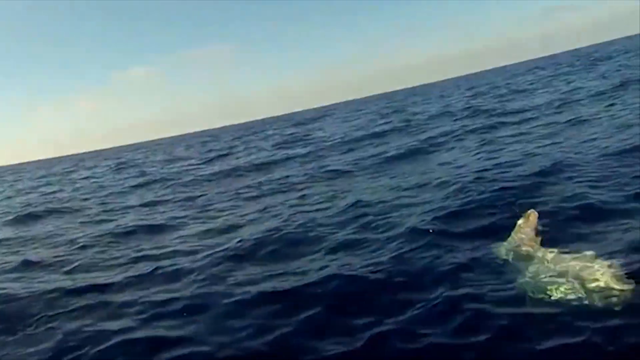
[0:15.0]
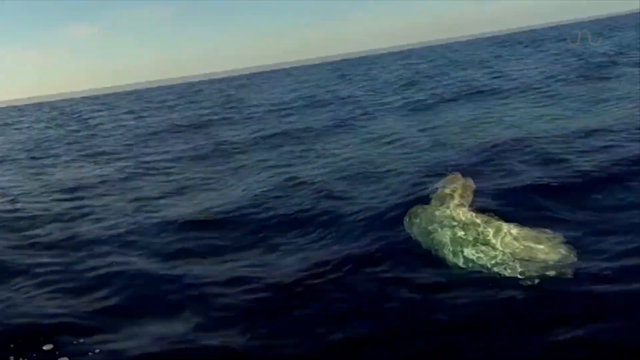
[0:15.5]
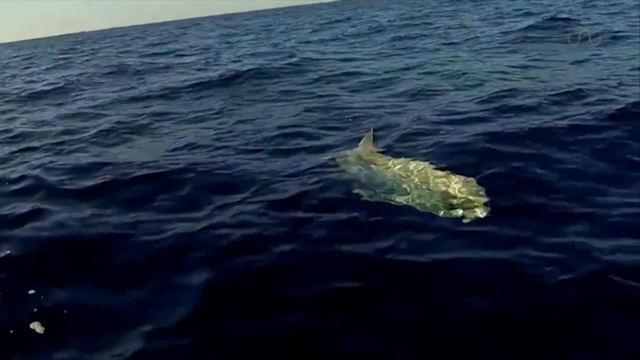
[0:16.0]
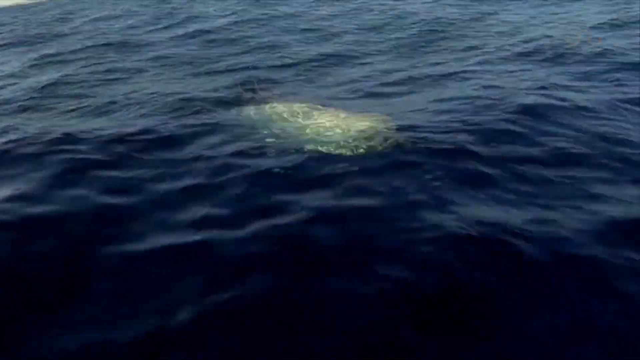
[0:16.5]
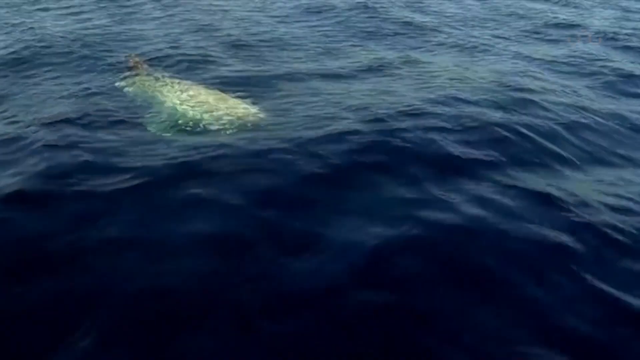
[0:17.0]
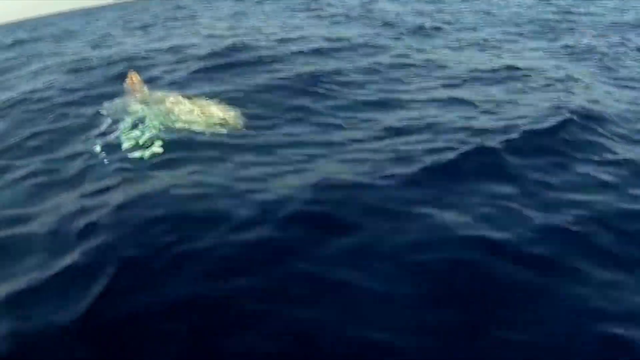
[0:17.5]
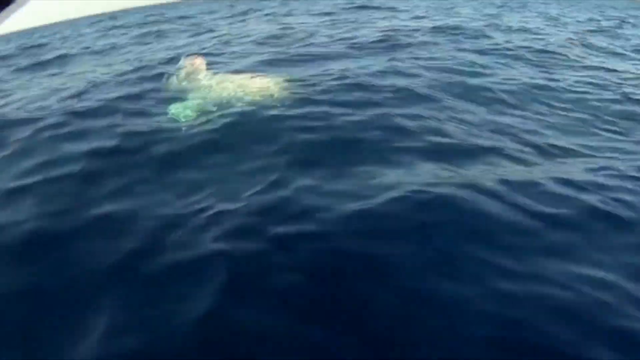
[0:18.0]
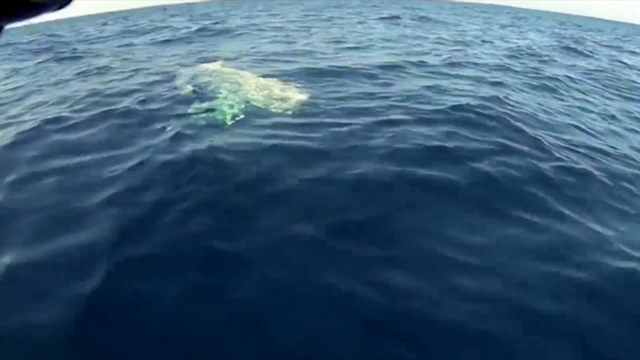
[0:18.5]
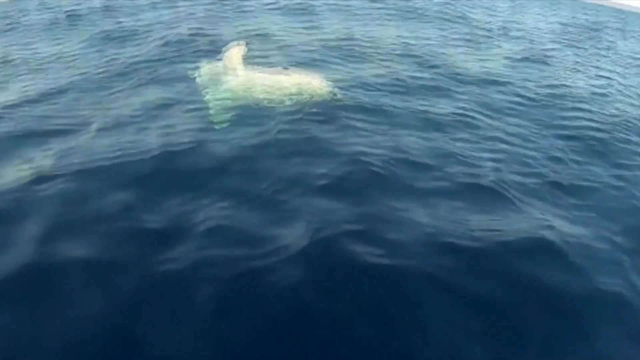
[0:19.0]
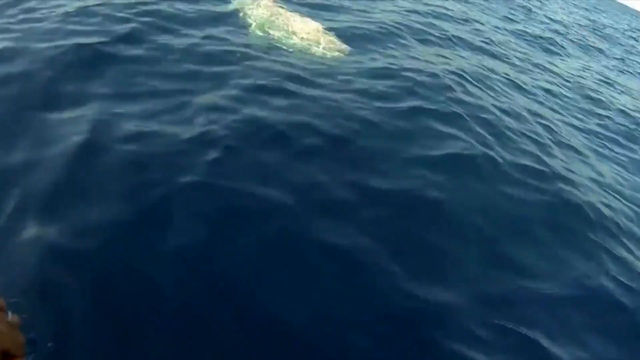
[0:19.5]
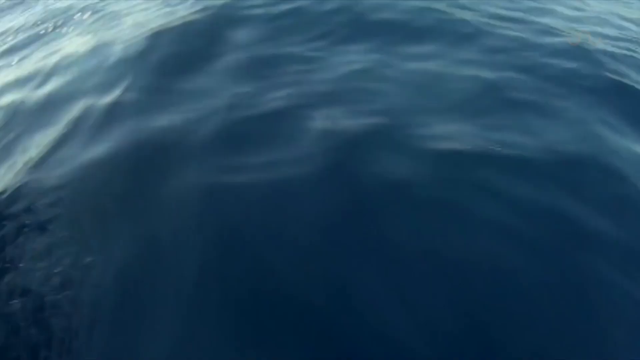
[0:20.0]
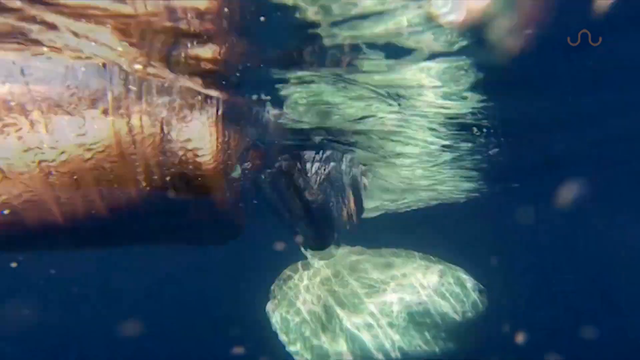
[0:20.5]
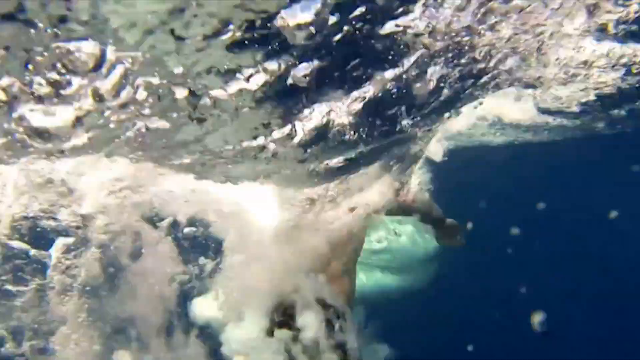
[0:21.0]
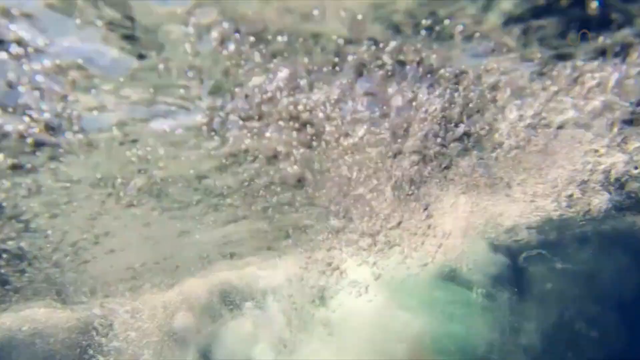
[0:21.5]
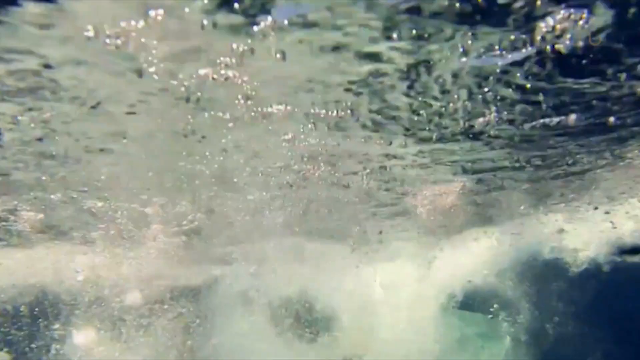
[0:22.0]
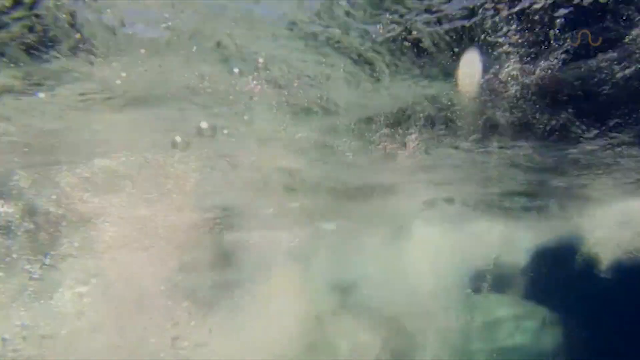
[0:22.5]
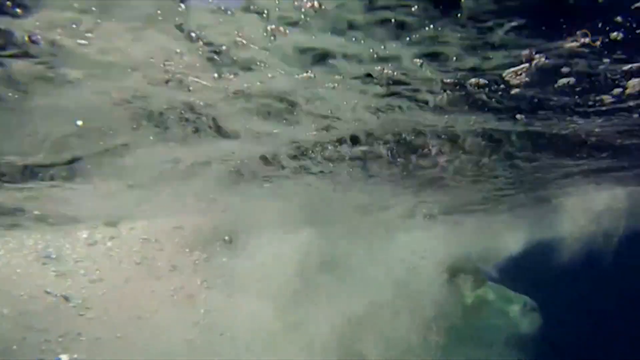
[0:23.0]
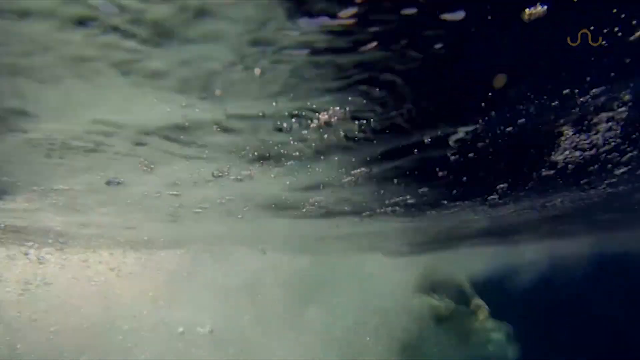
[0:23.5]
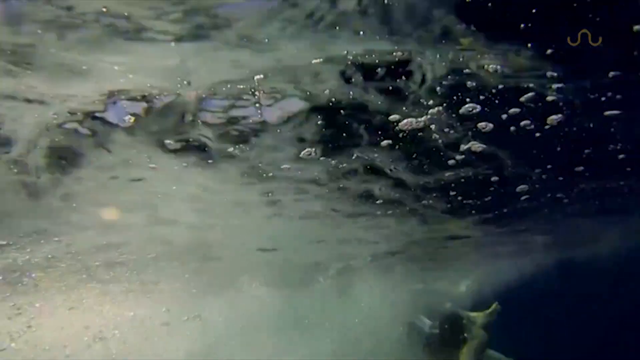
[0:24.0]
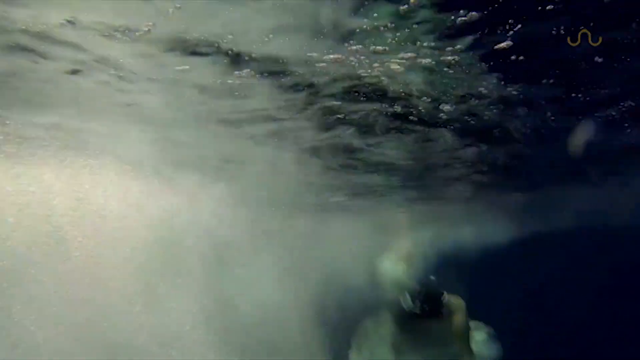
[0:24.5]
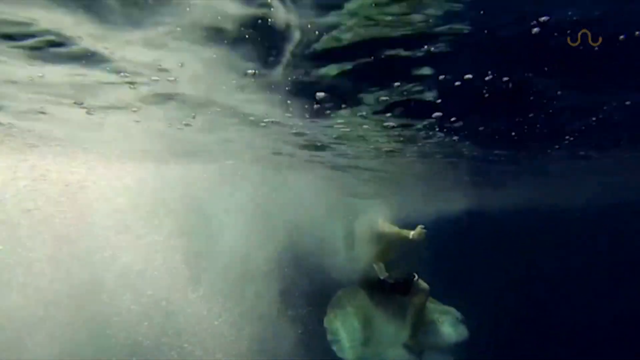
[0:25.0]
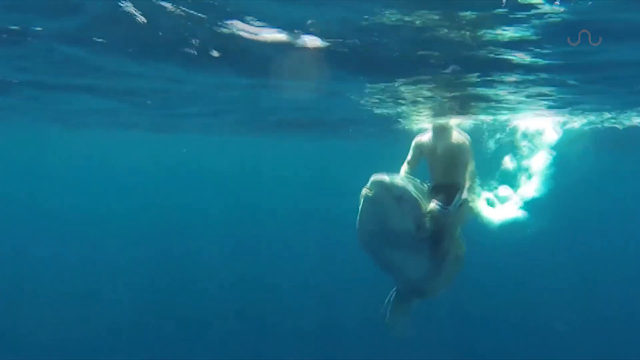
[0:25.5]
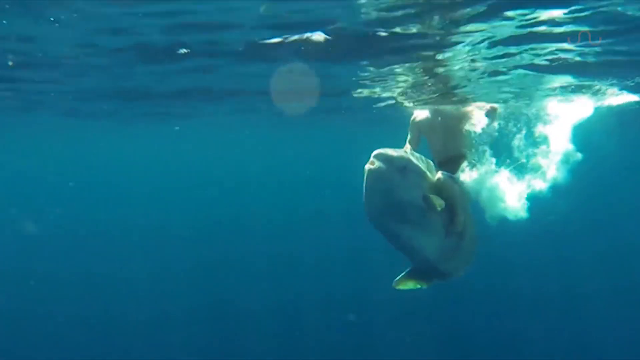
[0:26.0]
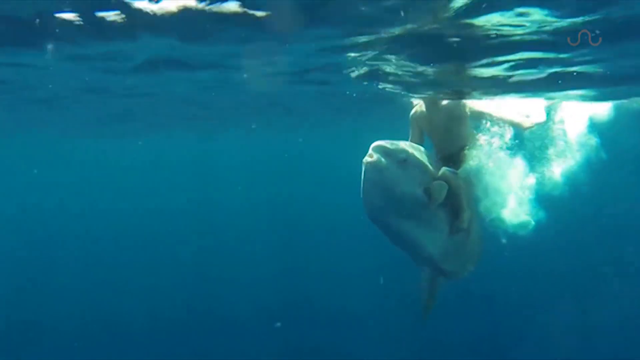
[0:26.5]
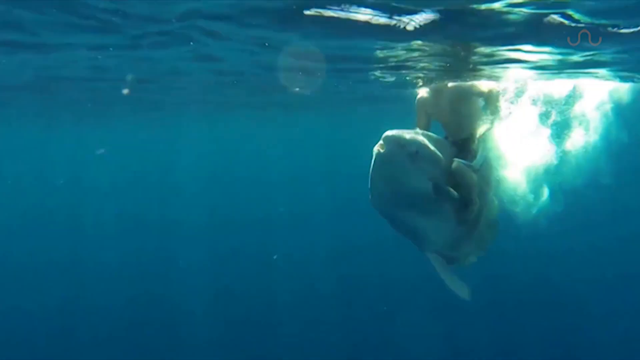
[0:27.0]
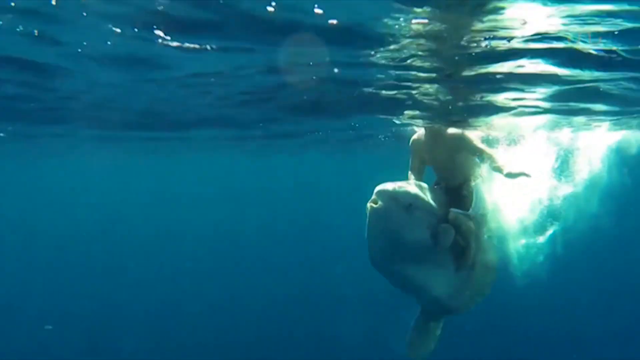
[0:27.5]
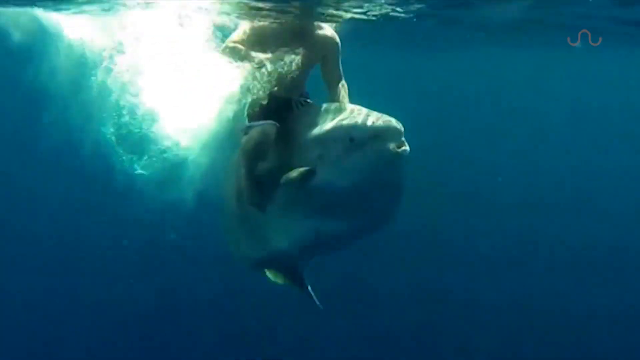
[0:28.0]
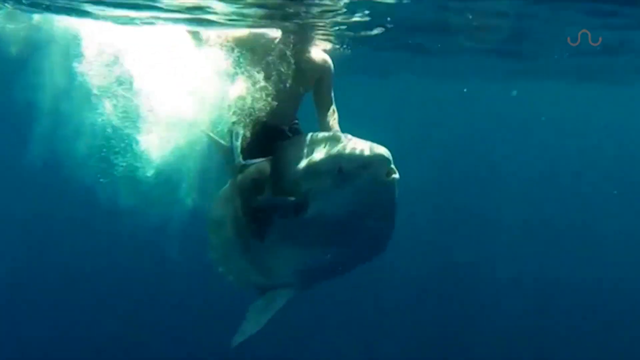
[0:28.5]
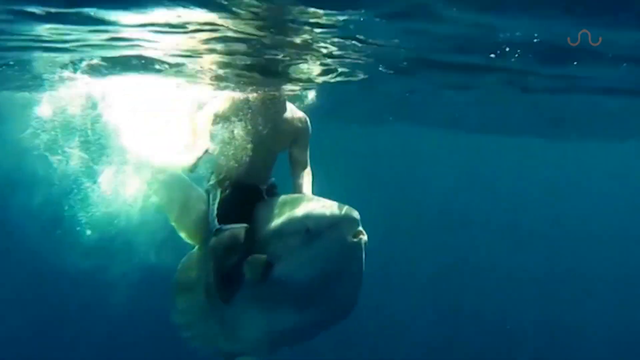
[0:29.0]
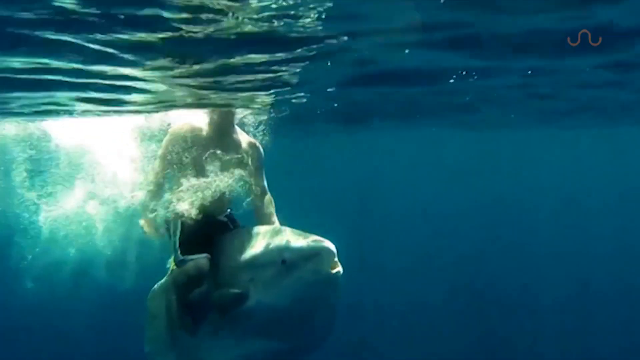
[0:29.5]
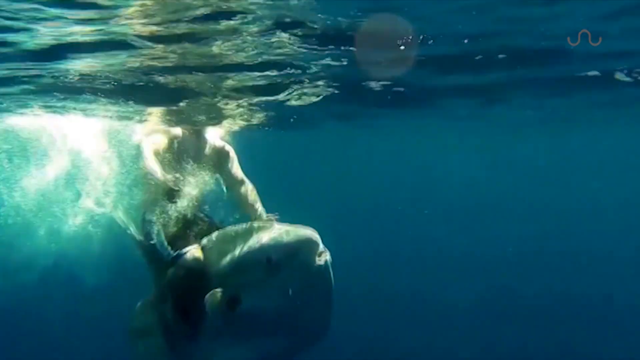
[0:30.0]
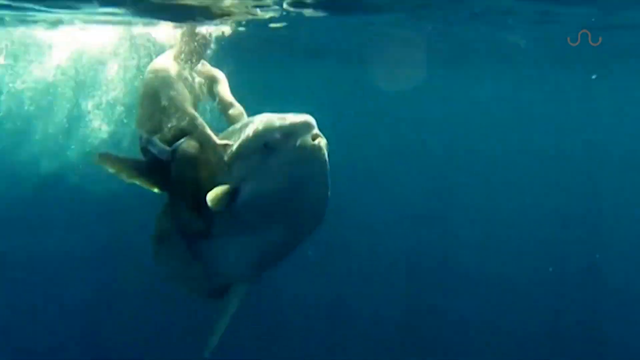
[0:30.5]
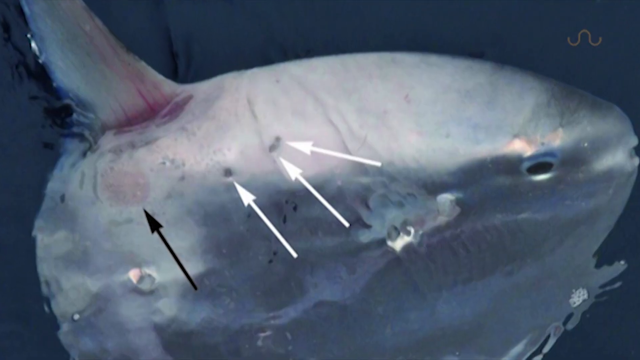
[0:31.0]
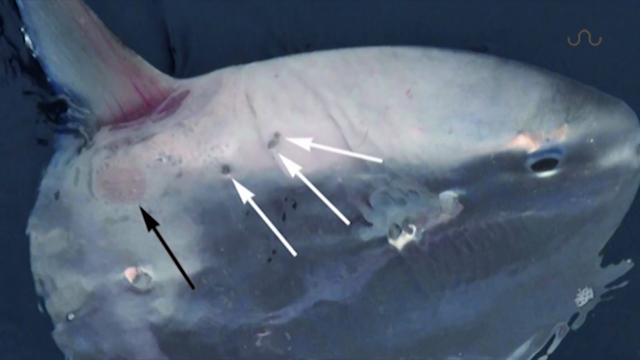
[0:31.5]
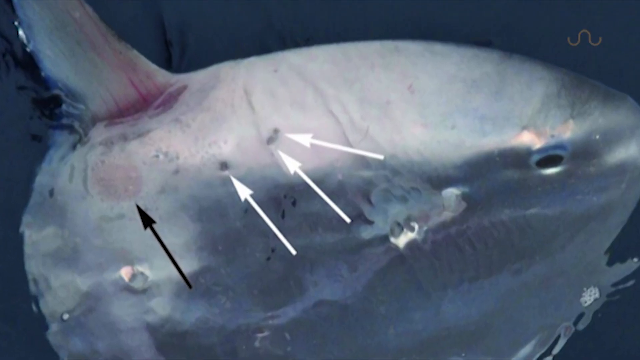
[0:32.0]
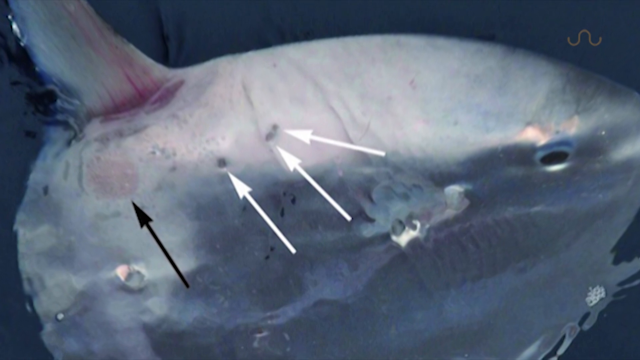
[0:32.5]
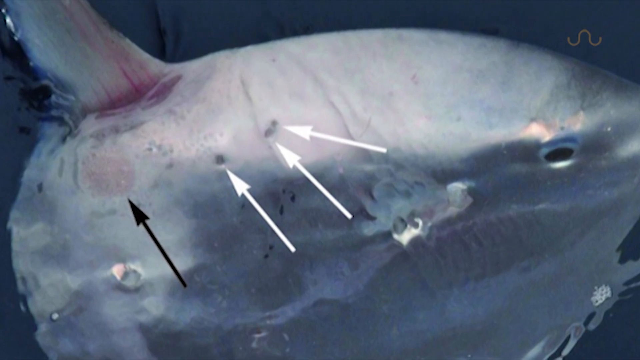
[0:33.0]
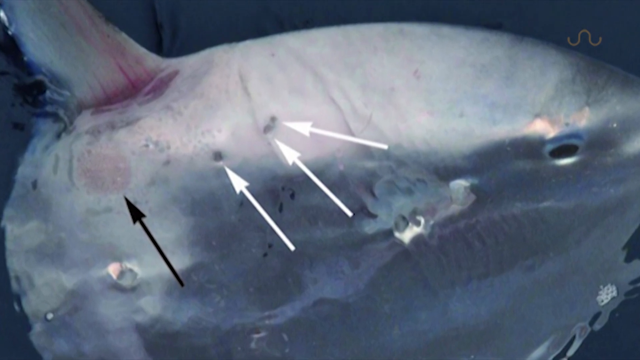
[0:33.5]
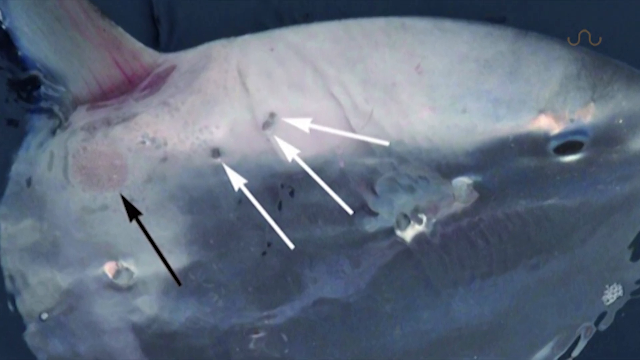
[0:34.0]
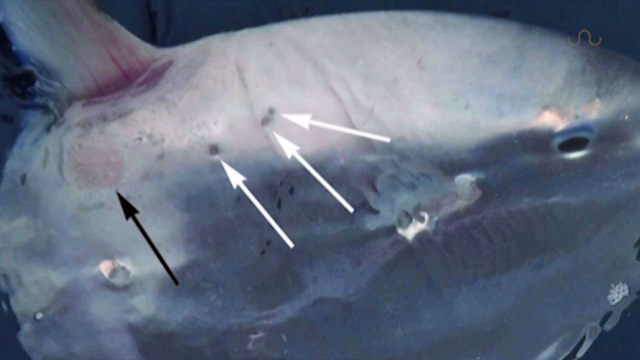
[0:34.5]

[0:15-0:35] The camera looks into the water, where a shark-like thing floats around and goes under the water. It looks like someone scuba dives a little, and then a guy appears right on the back of the creature, which is unclear but looks like a shark, possibly a dolphin or fish. There seem to be bullet-hole-like marks on its side. Seen from the top down, it almost looks like a seal, flopping around in the water with little flippers that are kind of hard to see. The man wears no safety gear and no shirt; he hops on the shark-like creature. The marks on its side look like gouges but are perfectly circular, and there is some weird yellow-brown coloring.